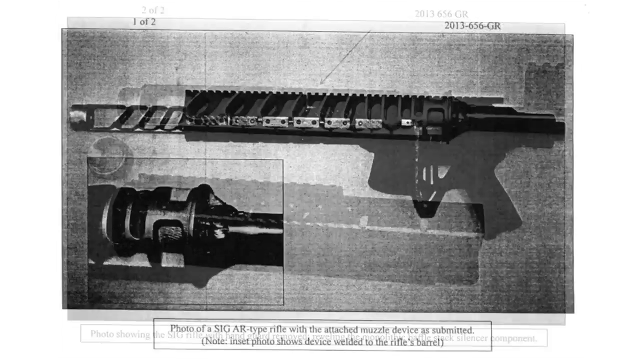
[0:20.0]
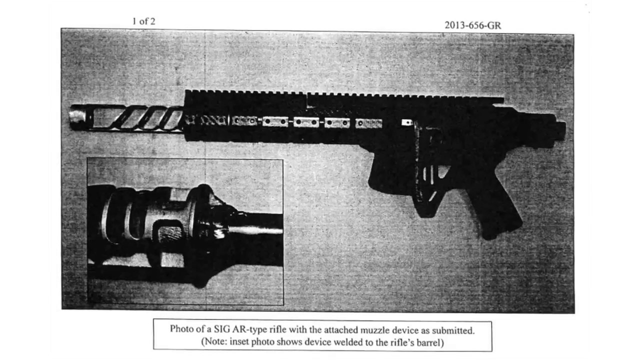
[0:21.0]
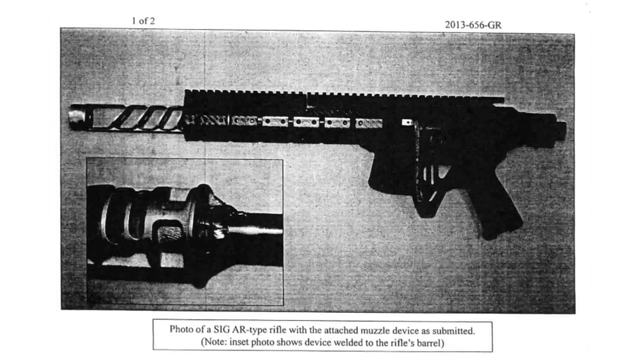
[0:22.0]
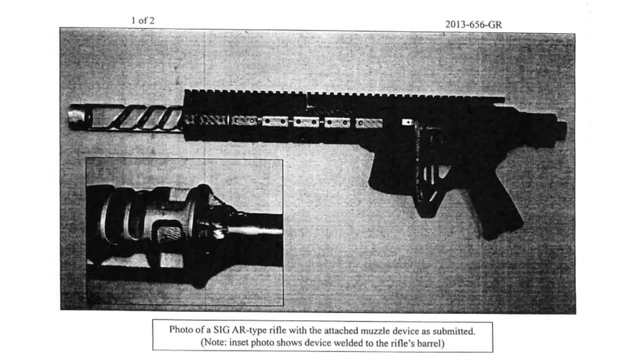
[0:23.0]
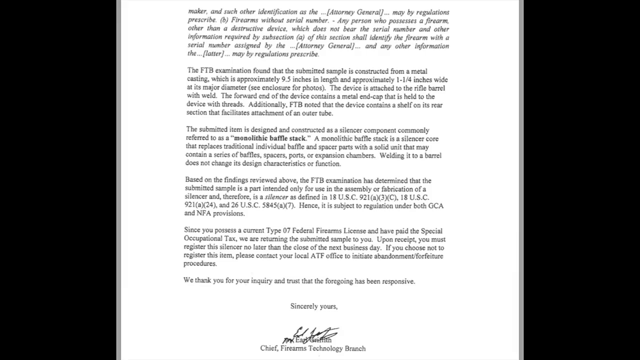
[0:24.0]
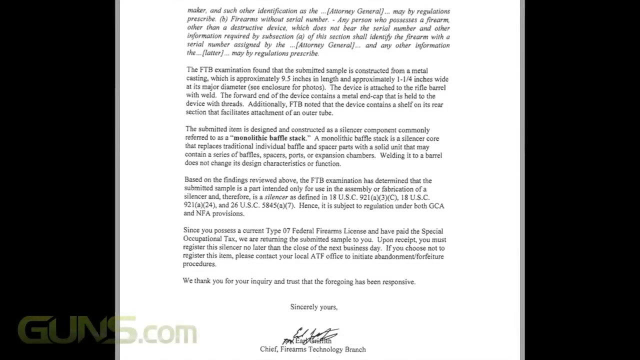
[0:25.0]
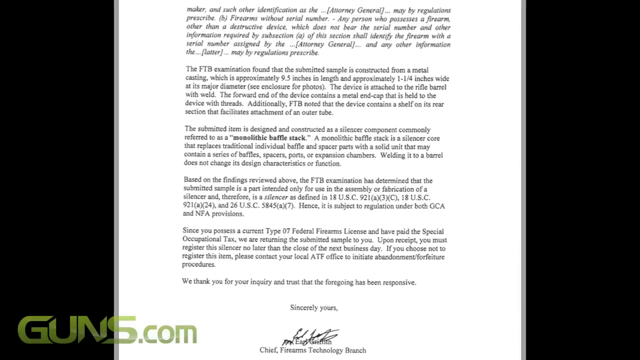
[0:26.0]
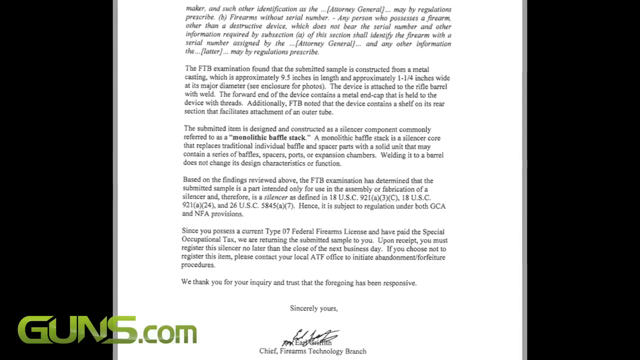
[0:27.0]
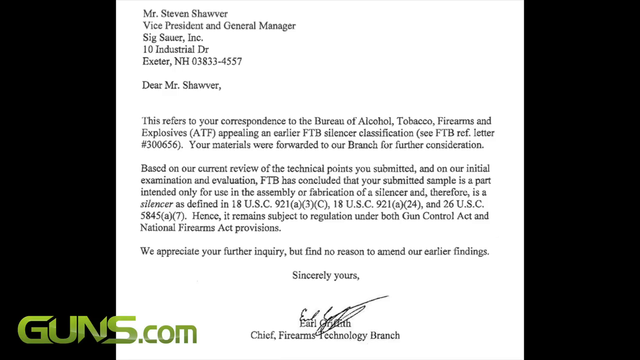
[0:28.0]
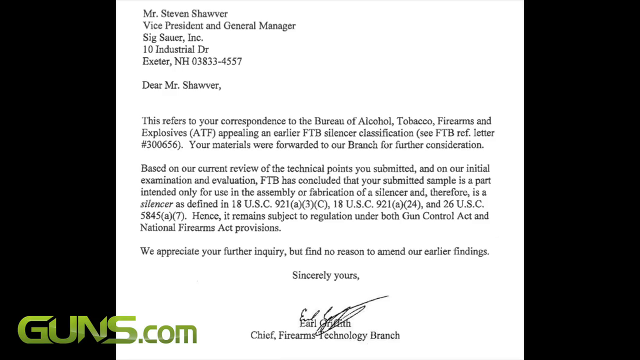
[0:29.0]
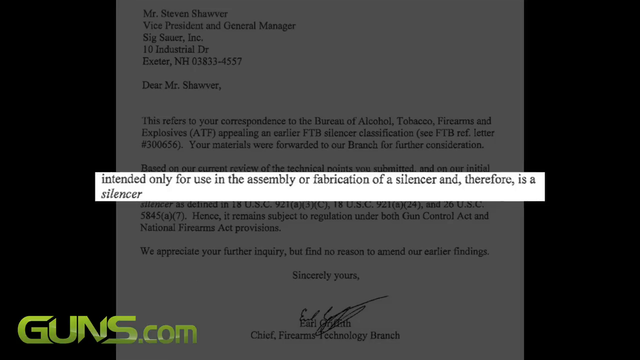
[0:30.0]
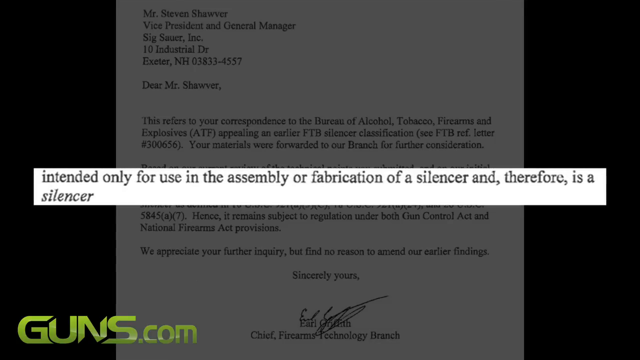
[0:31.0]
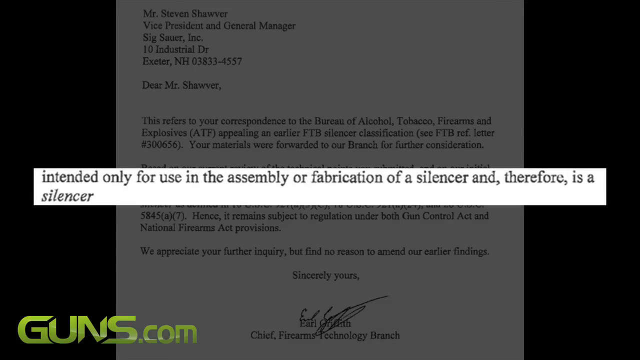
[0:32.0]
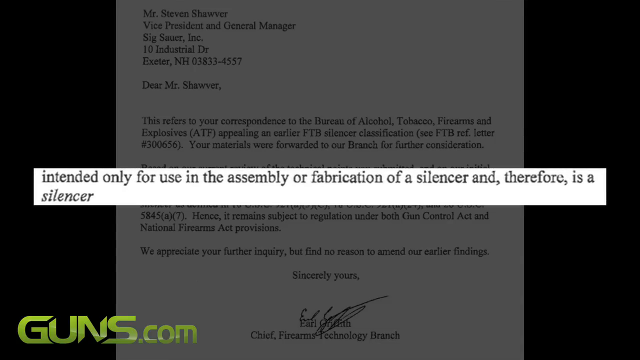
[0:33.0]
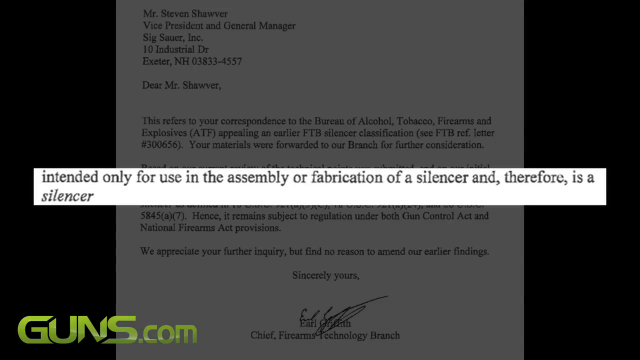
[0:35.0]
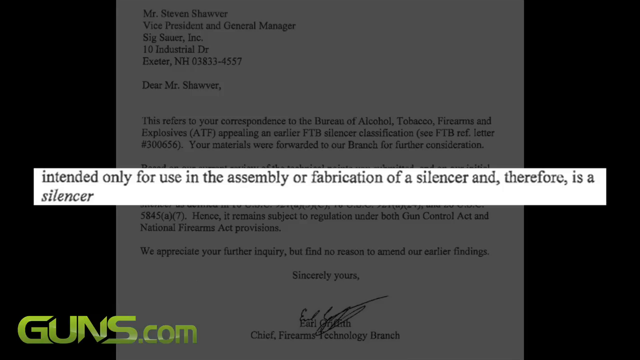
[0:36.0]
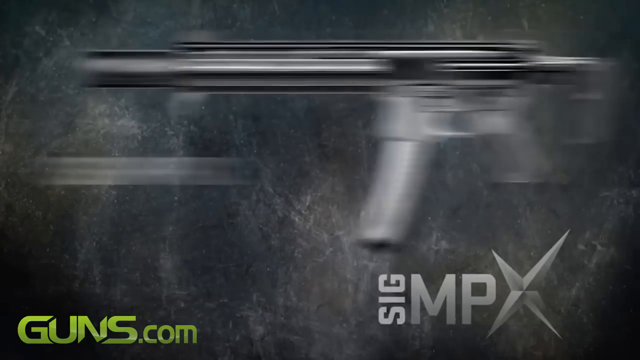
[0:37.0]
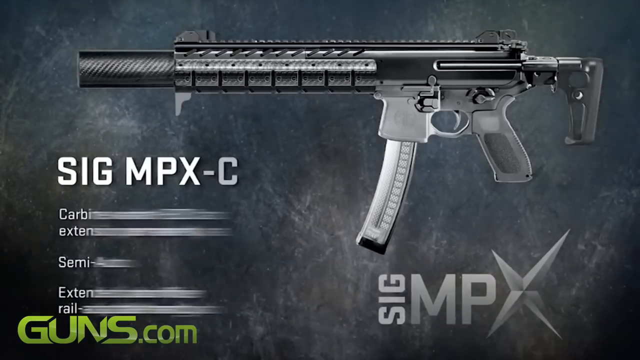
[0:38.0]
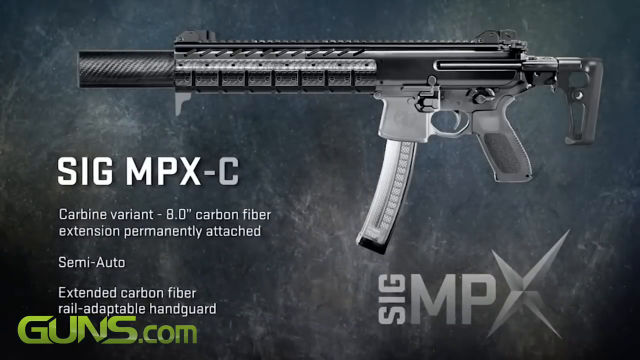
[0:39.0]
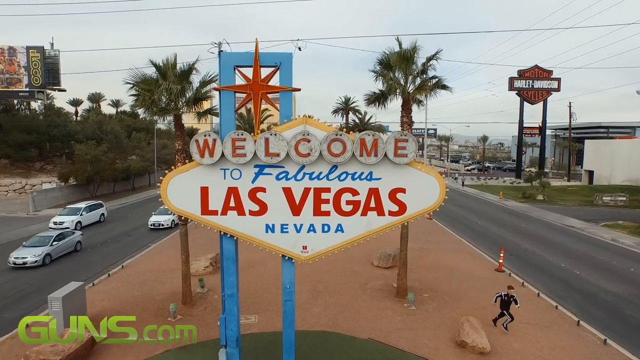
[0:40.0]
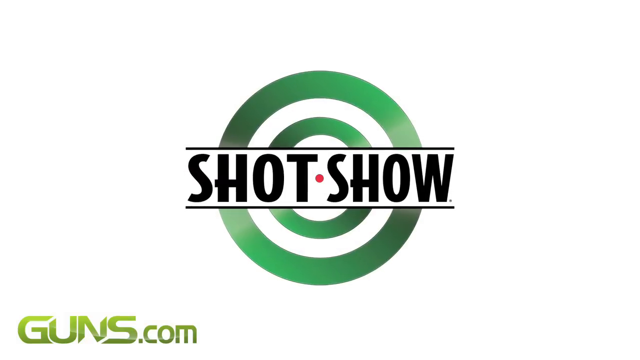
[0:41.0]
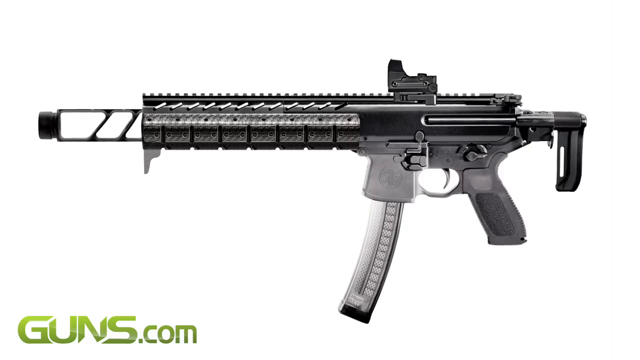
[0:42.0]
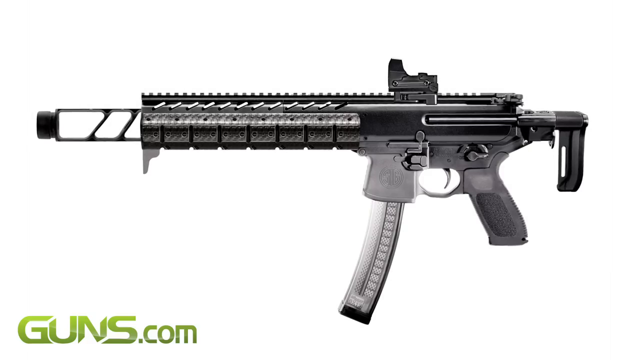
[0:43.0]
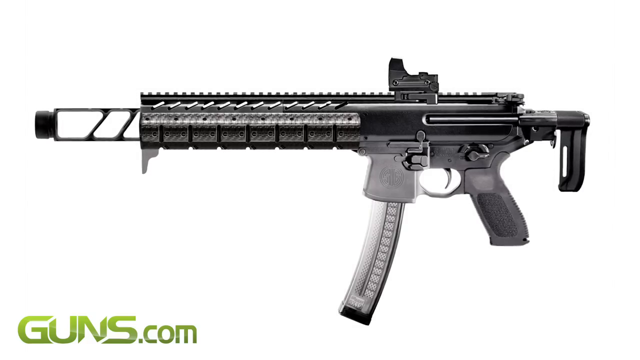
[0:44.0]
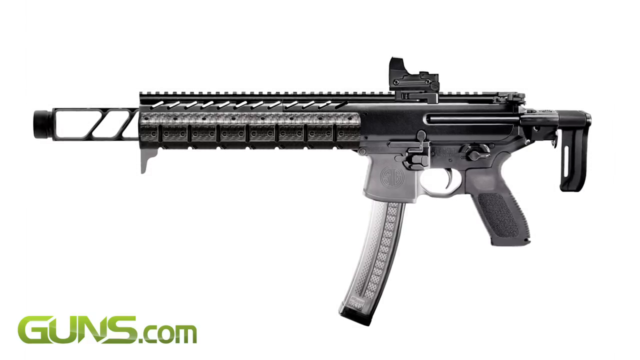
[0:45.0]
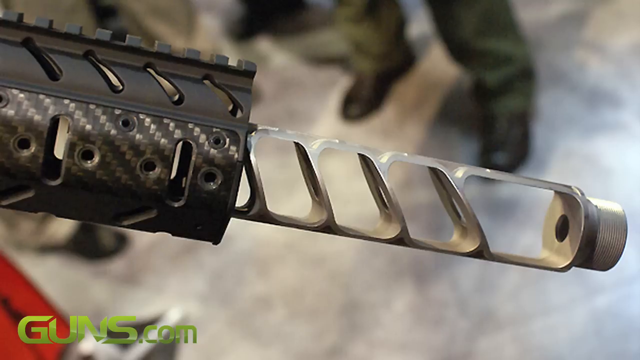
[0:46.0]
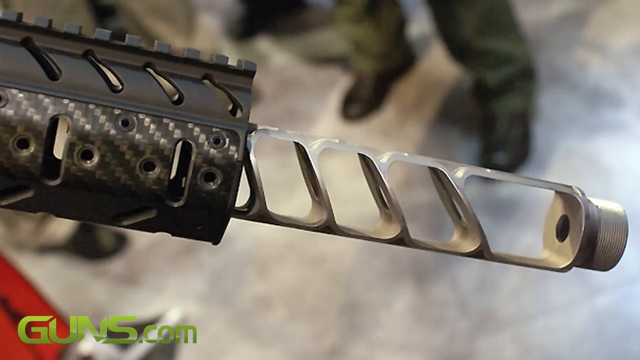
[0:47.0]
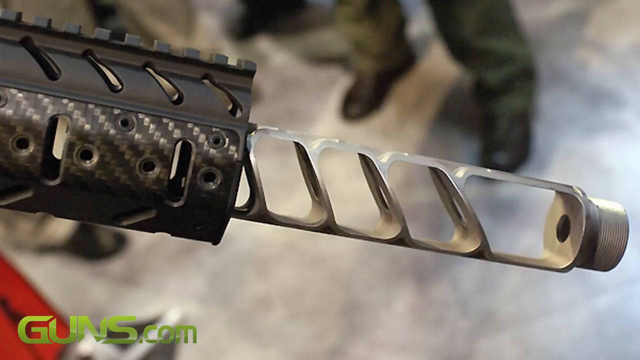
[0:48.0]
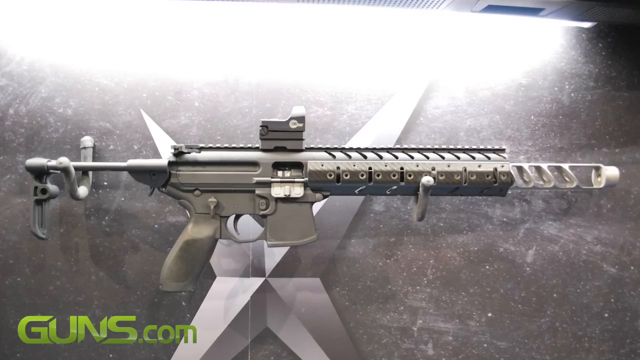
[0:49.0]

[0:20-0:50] The next picture is hard to make out and looks like an old black-and-white photo from some old book, kind of dusty and hard to read. A weapon is at the top, barrel pointing left and handle on the right, a slightly different weapon than the earlier ones. In the lower left is an inset close-up of some part of it, apparently showing where the nozzle meets the rest of the barrel, though what it shows is unclear. Next is a sheet of paper covered in typewritten font, apparently about five paragraphs, each four or five lines long; the first paragraph is italicized and the rest are not. One phrase in the middle is in bold text: "monolithic baffle stock". The shot holds on this sheet for a bit. Then another sheet of paper shows a letter with a name and address in the upper left, "Mr. Steven Shawver", followed by his title and address, with "Sig Sauer" as the company. Below is a three-paragraph letter to him, apparently beginning "Dear Mr. Shawver". A portion of the text is pulled out in an inset and reads "intended only for use in the assembly or fabrication of a silencer, and therefore is a silencer". Next is a picture of what looks like a similar weapon, labeled "Sig MPX-C" in the lower left with some stats below it; the weapon is at the top, barrel pointing left and handles to the right. Then comes a completely different image, "Welcome to Las Vegas, Nevada", which looks like a little ad for a slot show. After that come pictures of the weapons again, a quick run of three, four, or five straight pictures of weapons with the green Guns.com logo in the lower left.